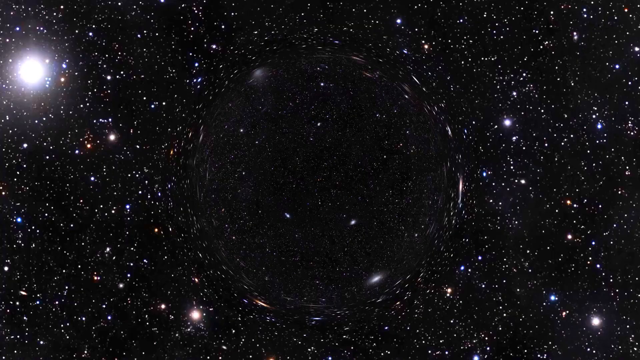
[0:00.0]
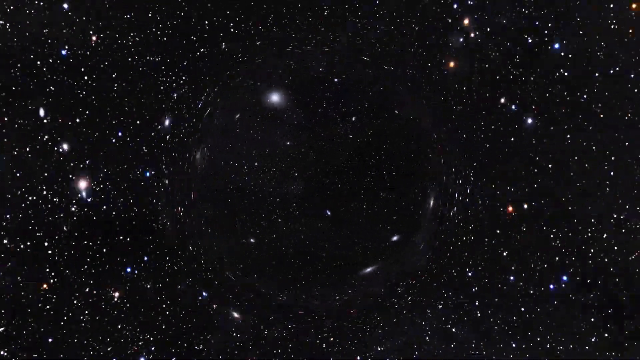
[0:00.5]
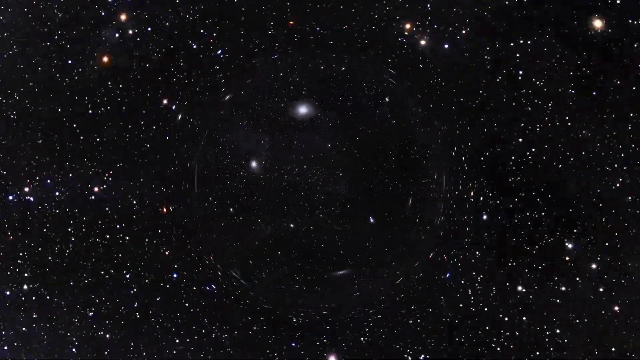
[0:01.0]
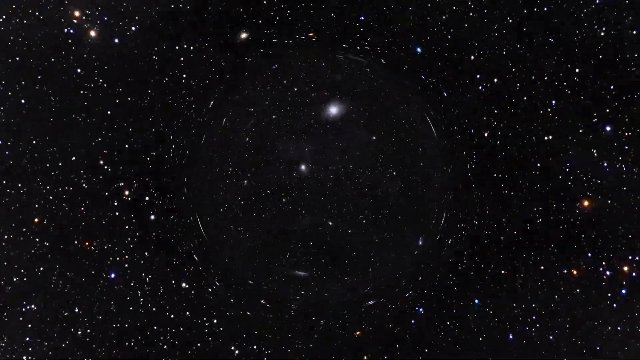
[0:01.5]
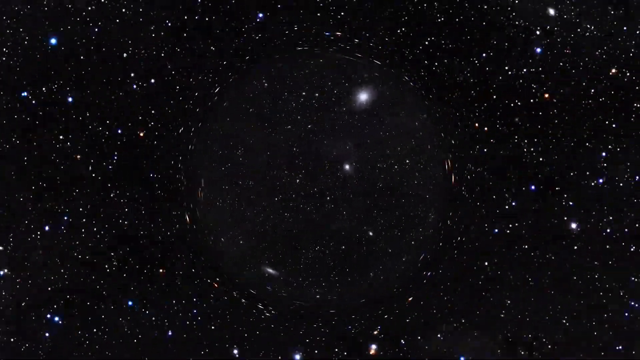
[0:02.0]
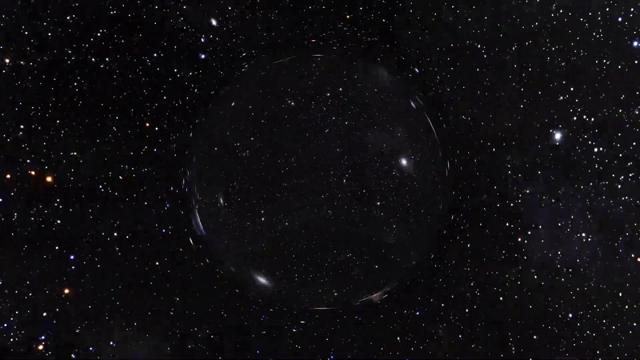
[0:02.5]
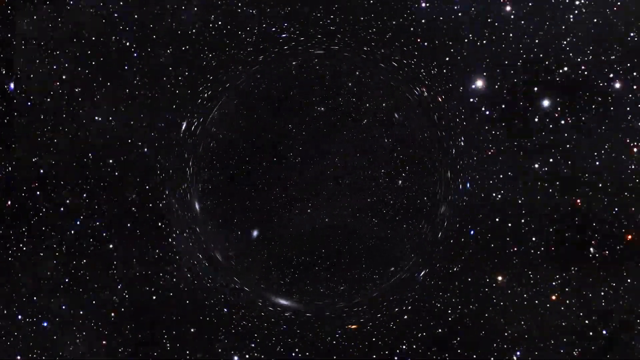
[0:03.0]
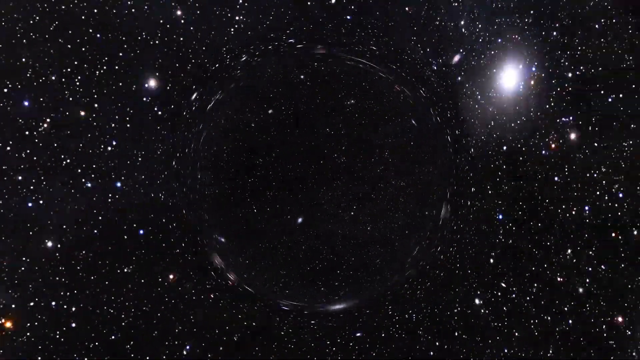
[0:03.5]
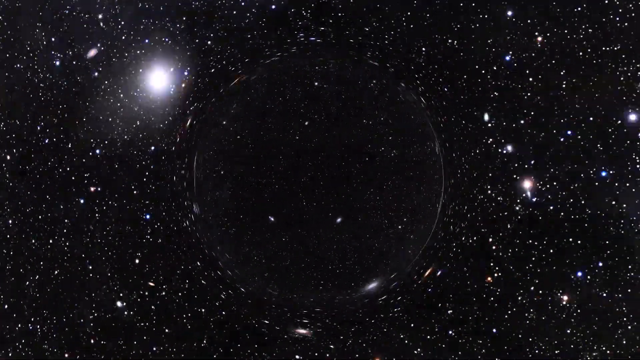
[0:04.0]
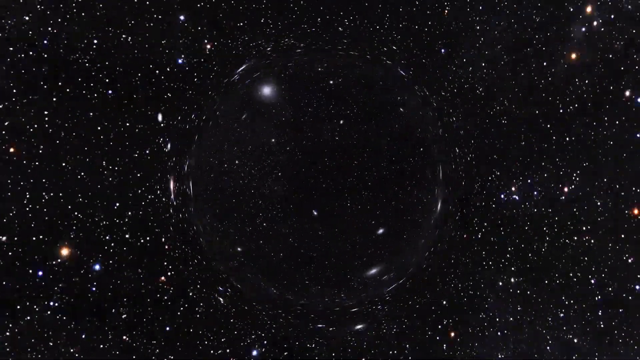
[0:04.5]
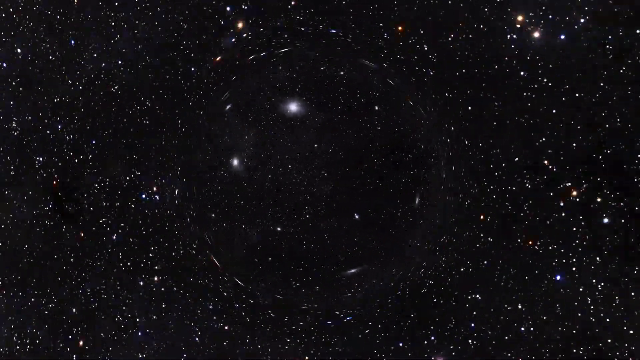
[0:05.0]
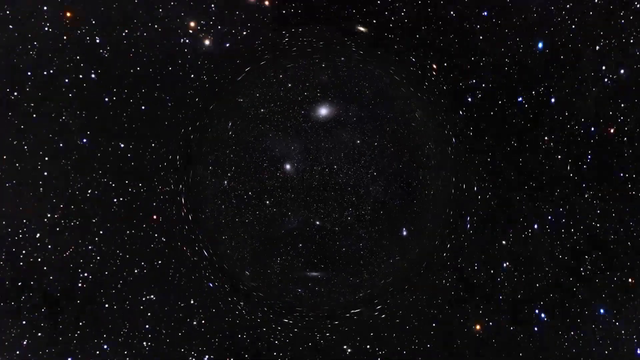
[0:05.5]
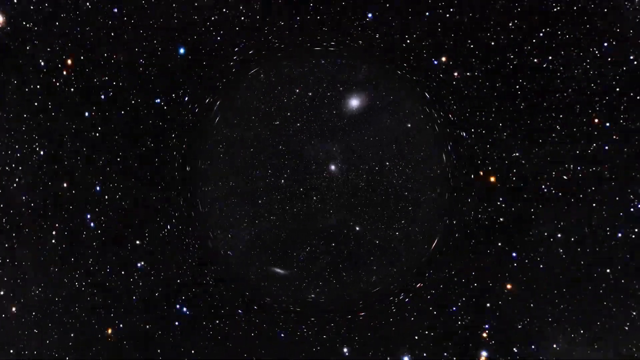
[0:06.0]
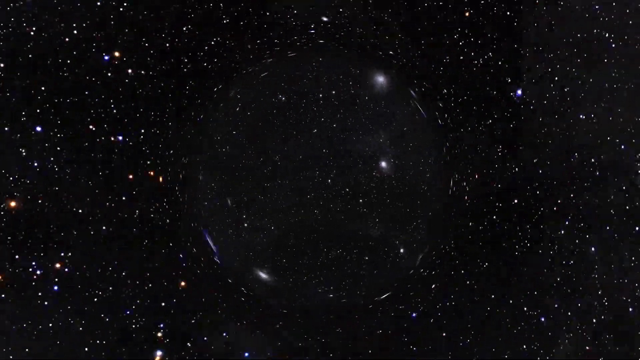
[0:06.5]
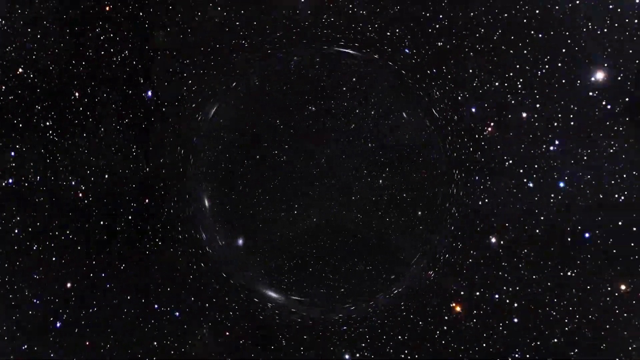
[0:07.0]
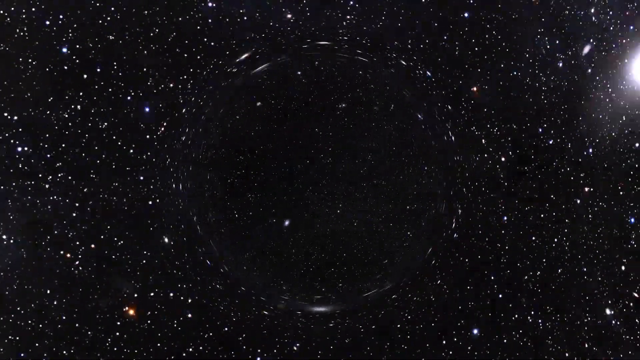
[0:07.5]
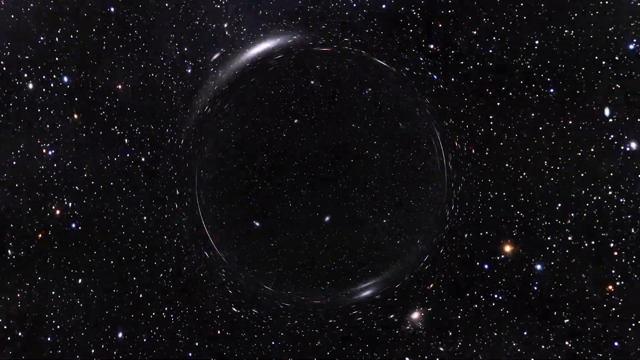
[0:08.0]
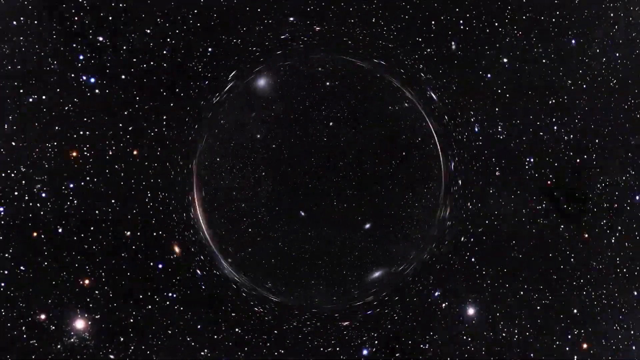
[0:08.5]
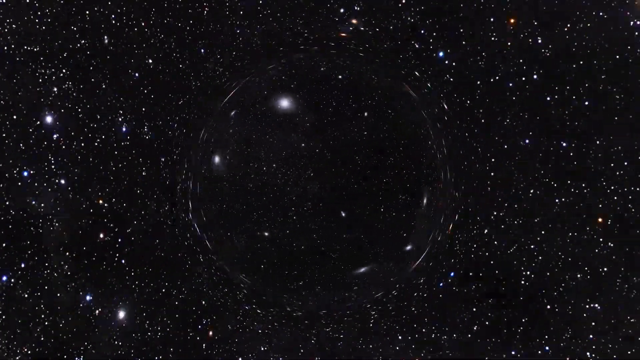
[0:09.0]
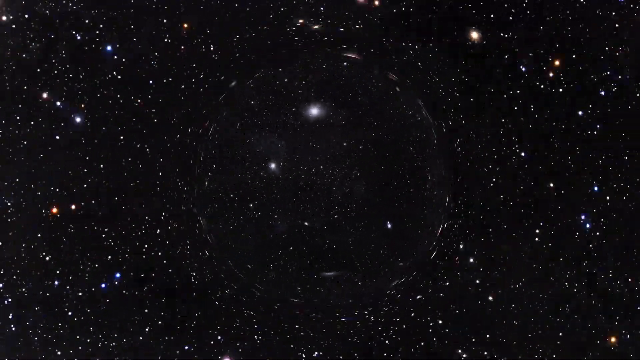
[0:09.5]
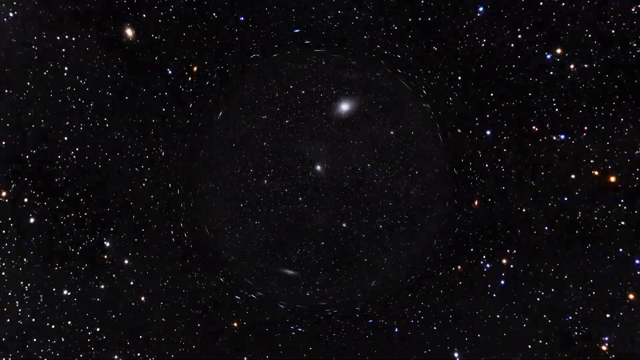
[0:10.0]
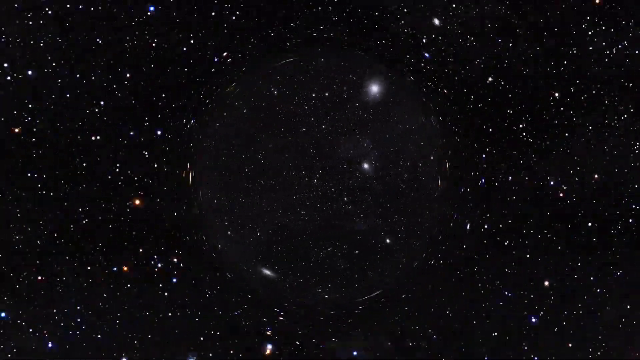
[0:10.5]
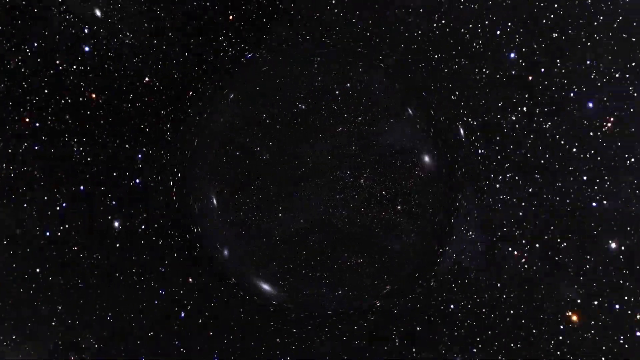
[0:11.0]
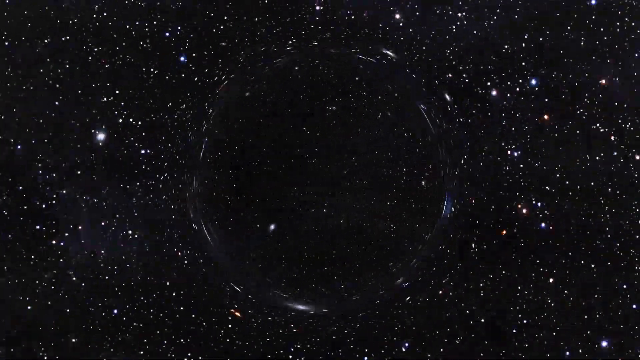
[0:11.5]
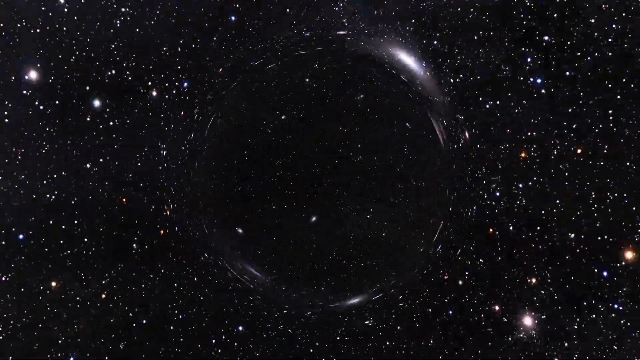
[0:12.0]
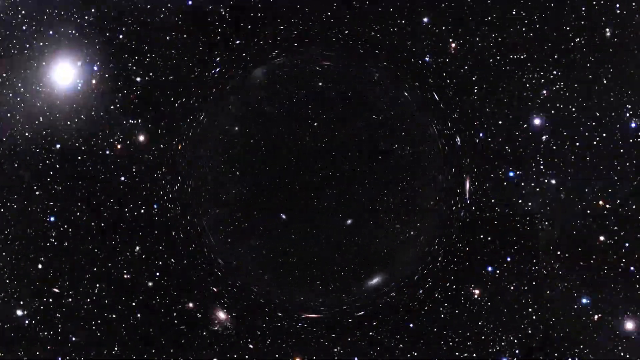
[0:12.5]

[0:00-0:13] Space is shown as the camera rotates around a black hole-like thing. Many different stars, large and smaller, can be seen in the background. As the camera rotates around this entity in the center, the center stays close to the same. A large bright sun in the background comes by once the camera rotates around that area. The center of the image looks to be warped as the camera rotates around this form, and it continues to do this for some time. The setting looks to be space.